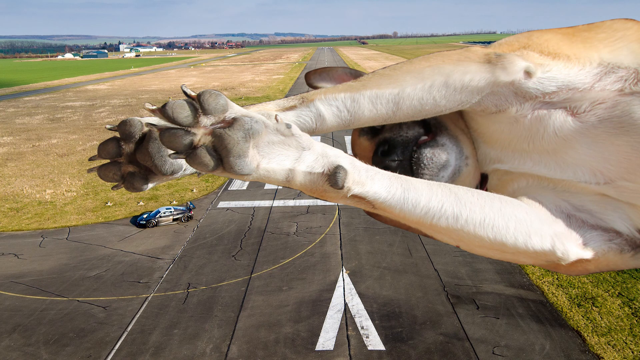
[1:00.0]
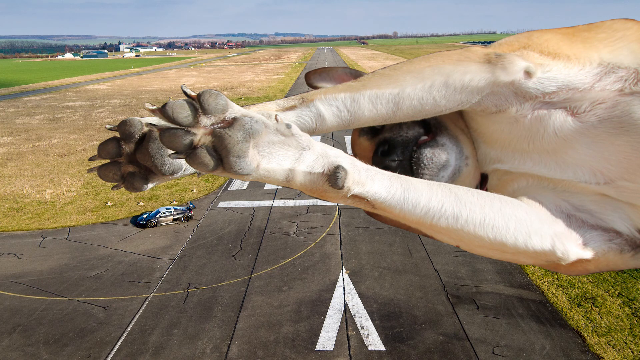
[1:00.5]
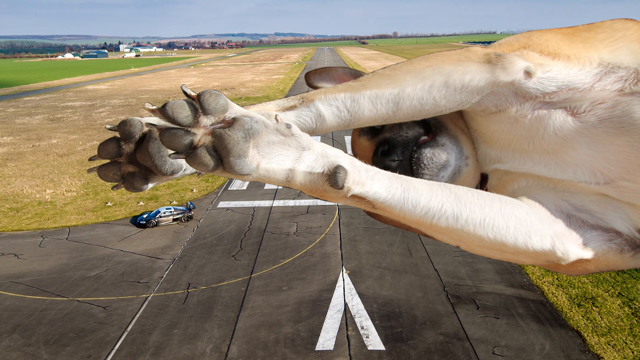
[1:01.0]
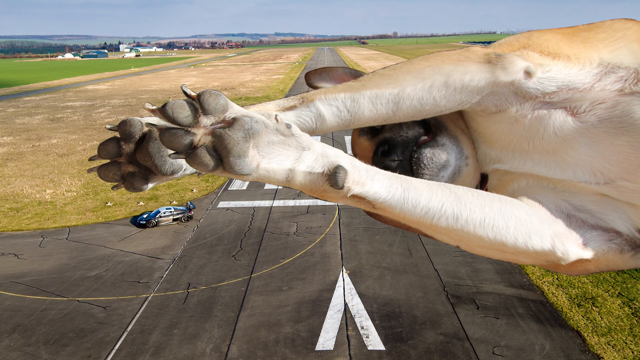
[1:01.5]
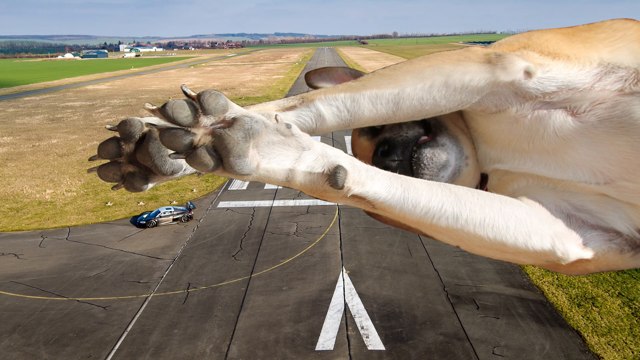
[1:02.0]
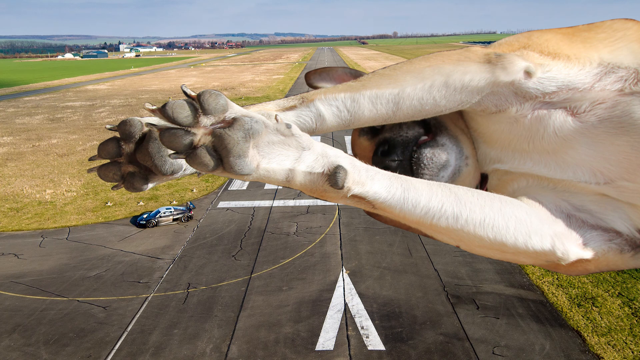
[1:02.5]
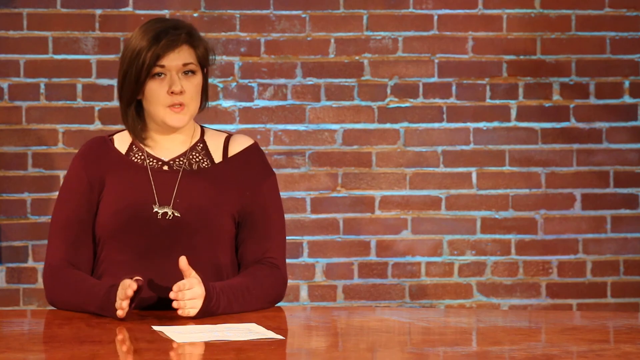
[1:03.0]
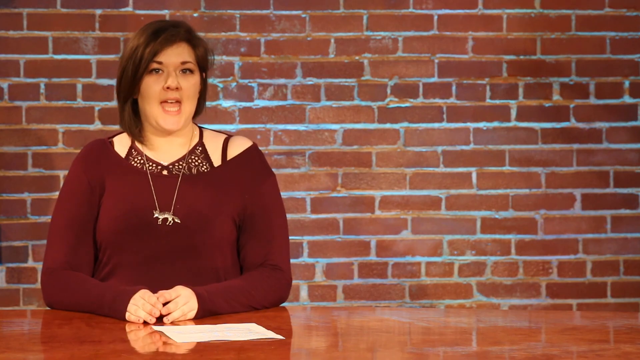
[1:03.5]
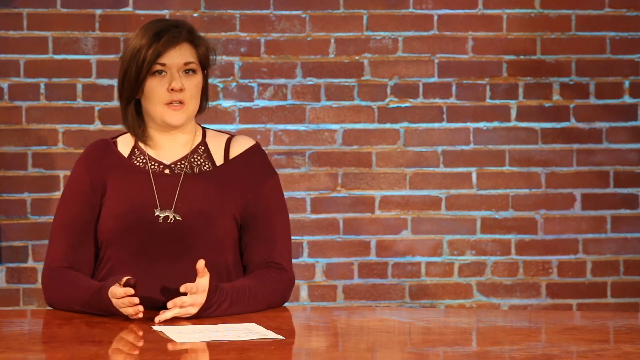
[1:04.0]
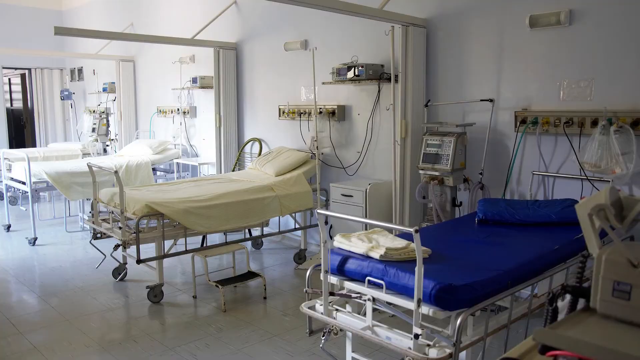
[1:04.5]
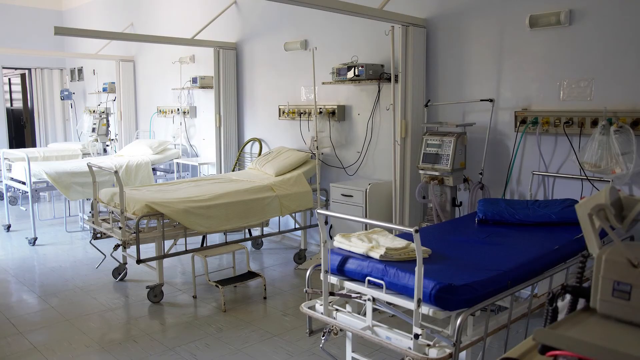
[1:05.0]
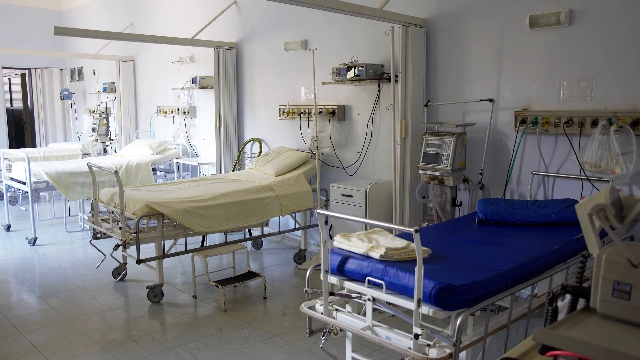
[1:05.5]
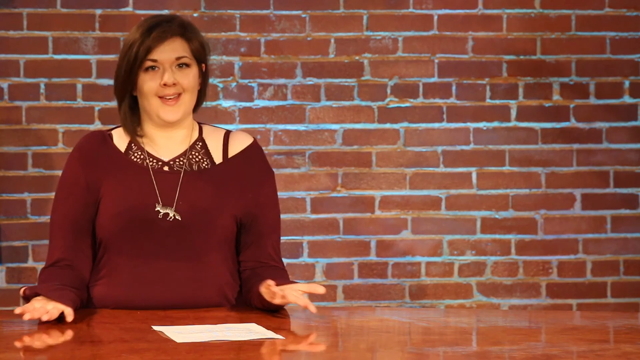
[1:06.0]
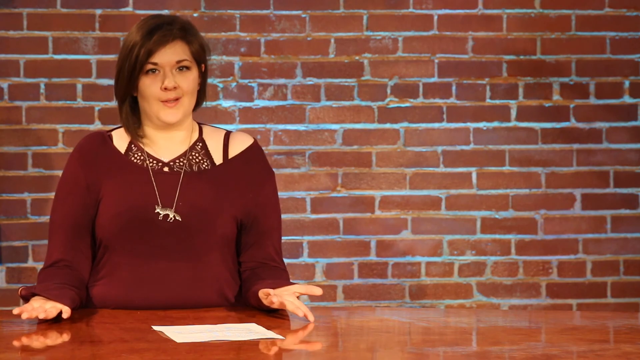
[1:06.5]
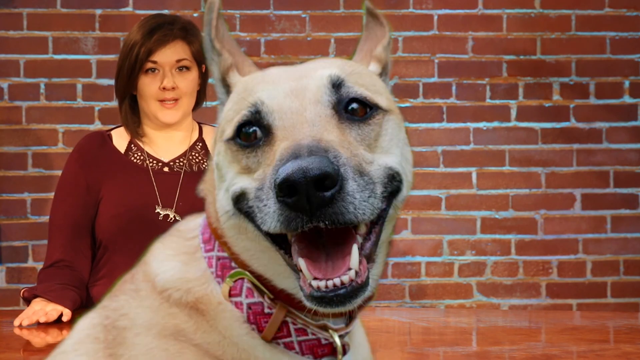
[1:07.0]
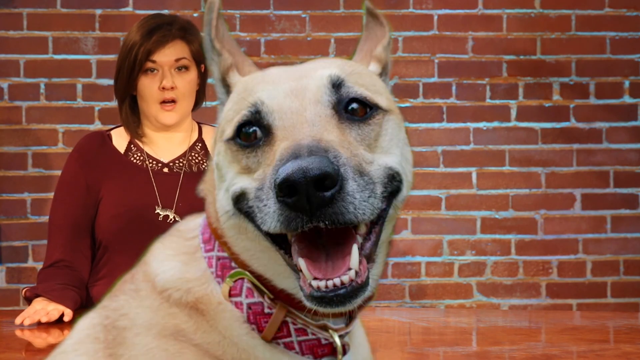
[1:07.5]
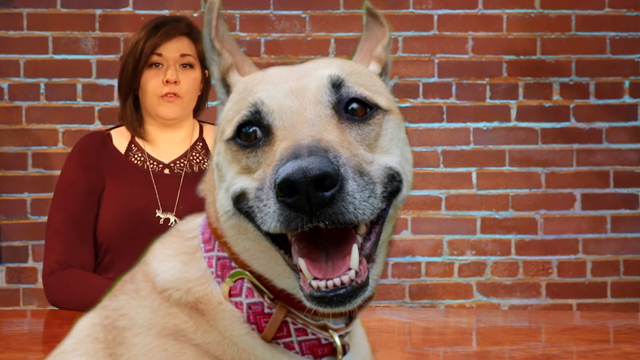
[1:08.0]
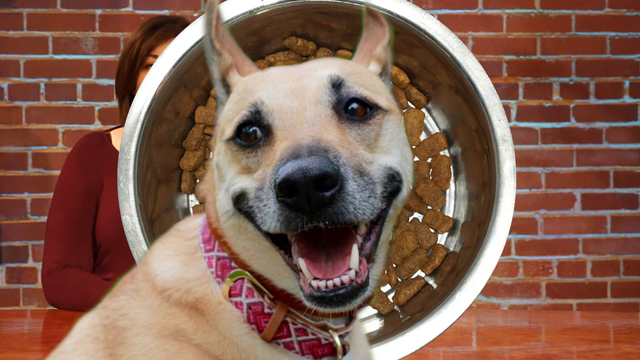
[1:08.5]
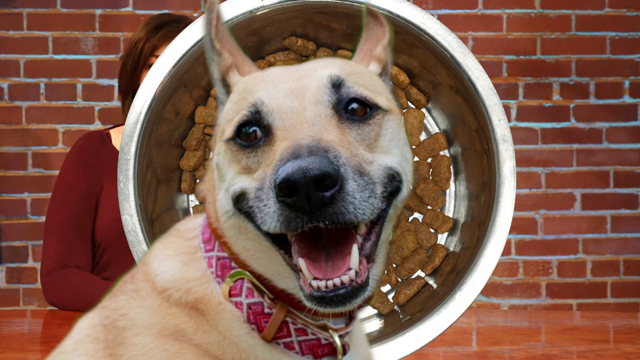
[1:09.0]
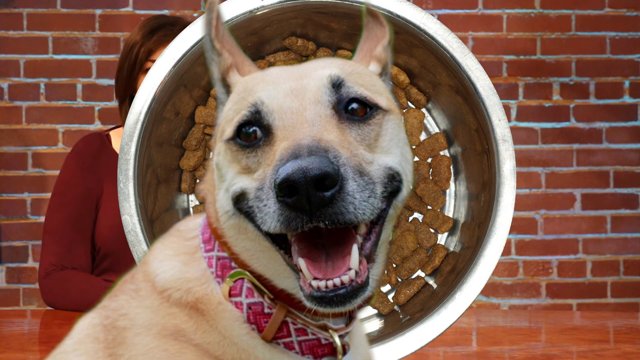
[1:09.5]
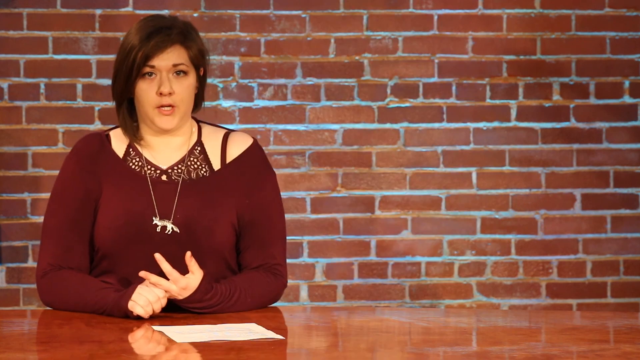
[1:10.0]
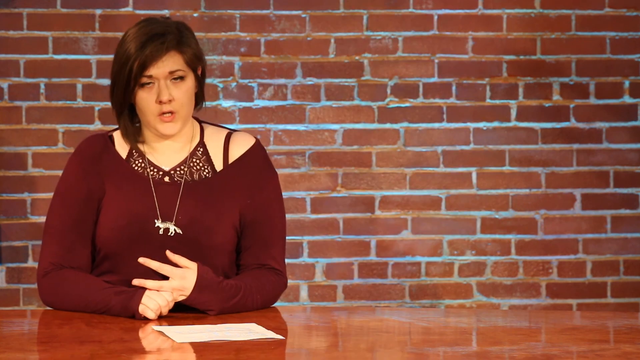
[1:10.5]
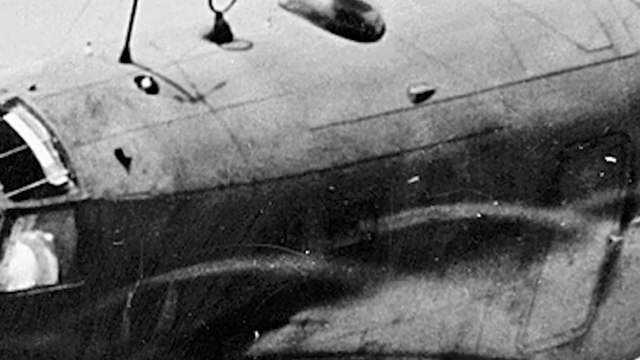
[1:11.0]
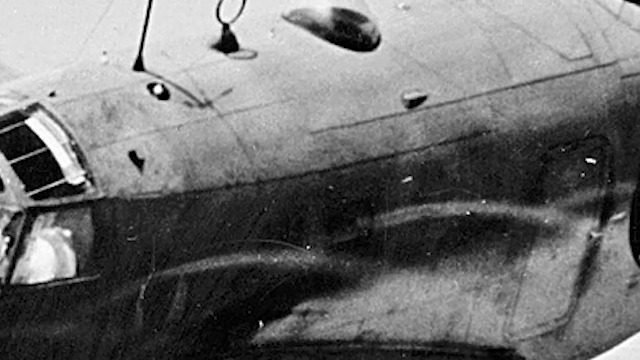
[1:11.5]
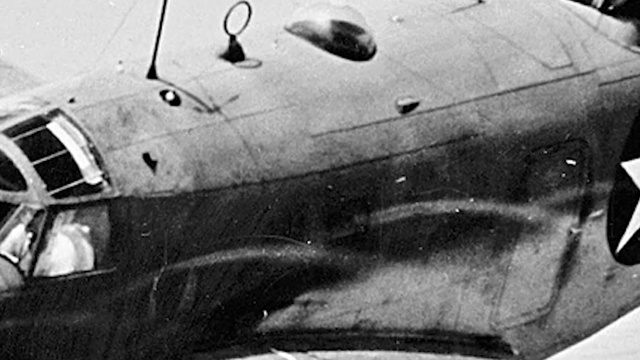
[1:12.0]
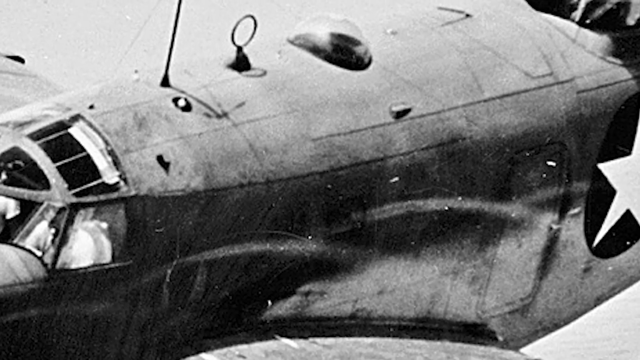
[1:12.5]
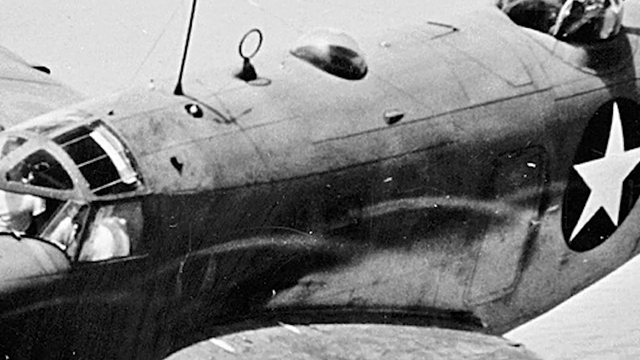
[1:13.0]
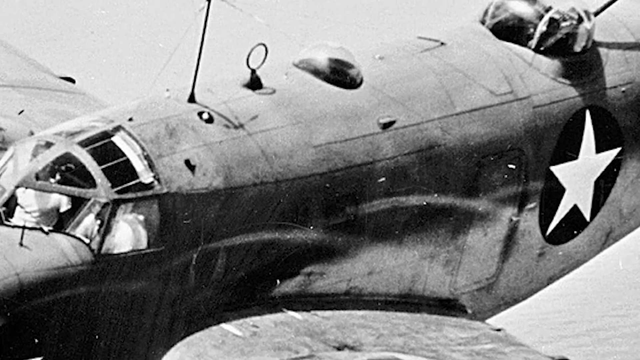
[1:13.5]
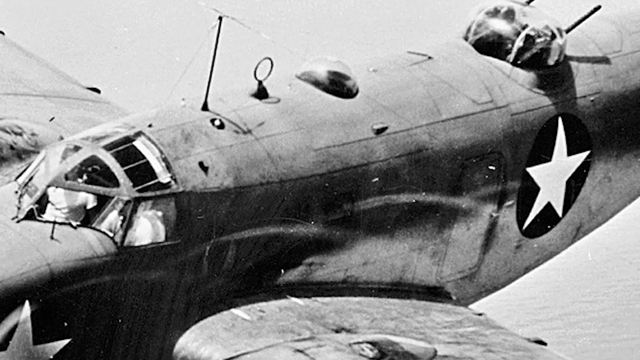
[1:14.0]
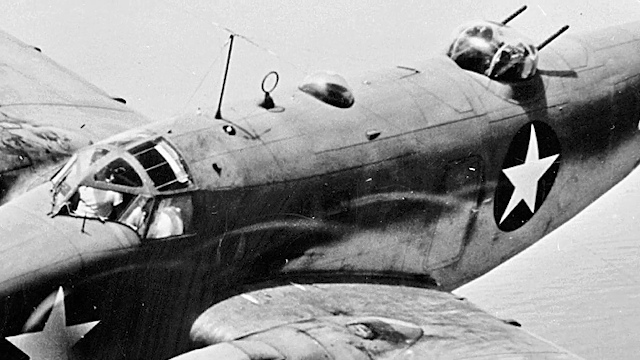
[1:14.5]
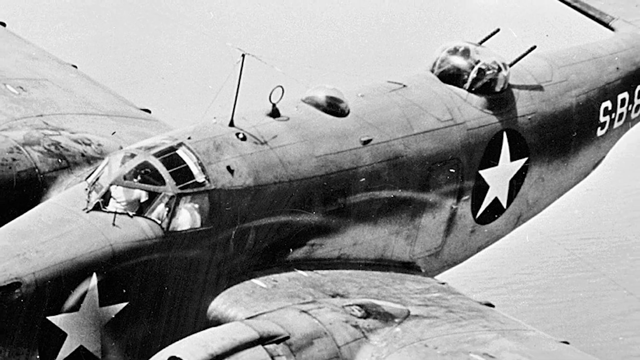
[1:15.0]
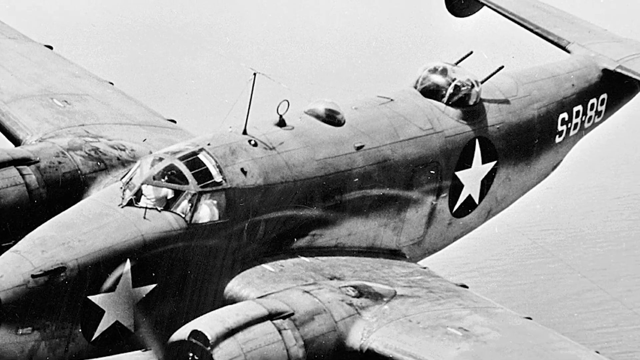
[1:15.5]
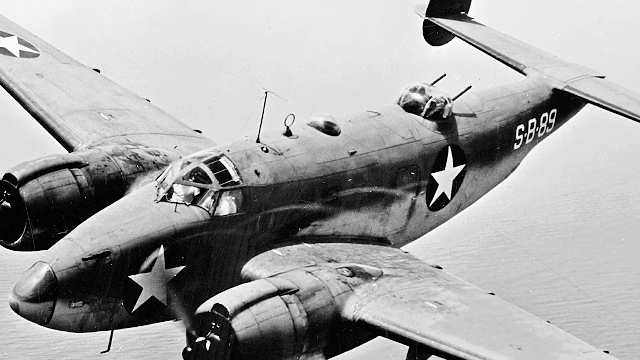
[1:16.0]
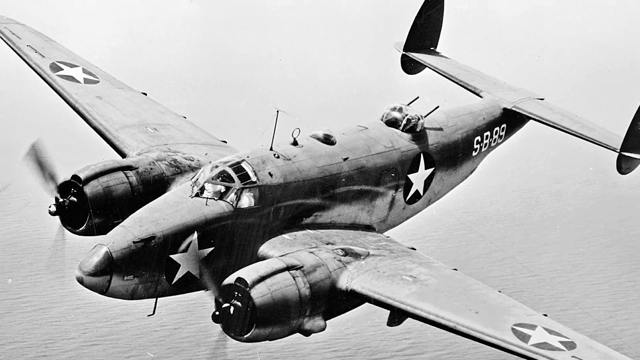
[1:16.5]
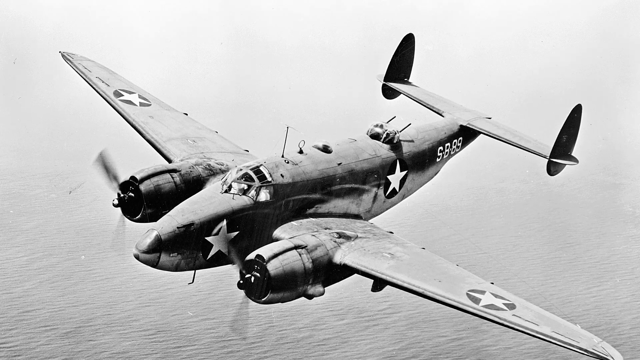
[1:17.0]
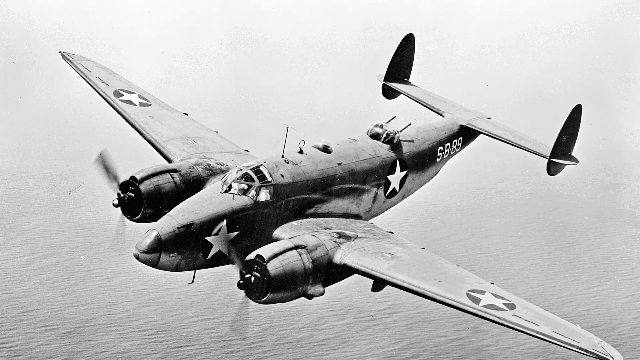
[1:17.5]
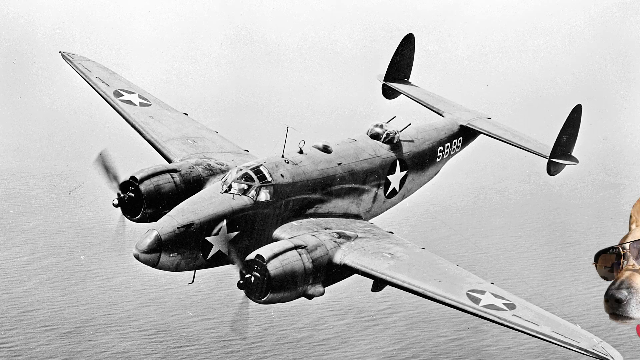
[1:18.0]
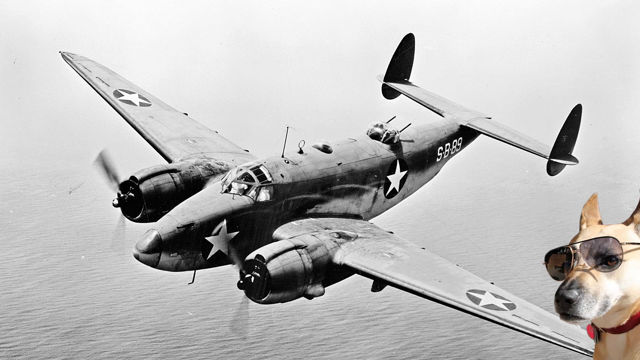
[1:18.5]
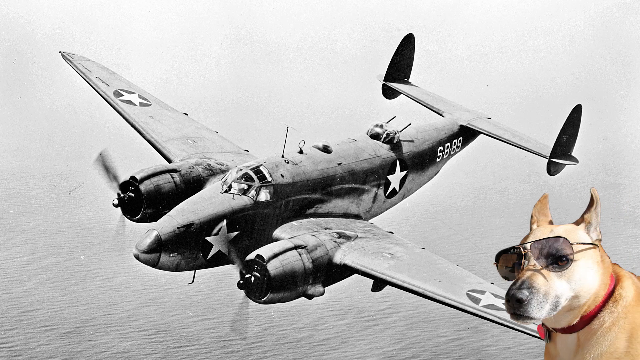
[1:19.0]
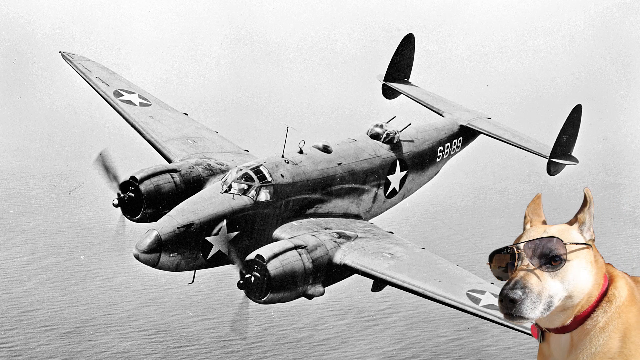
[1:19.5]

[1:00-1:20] A picture of a dog has been blown up really big and laid on a runway, so the dog takes up most of the picture. The dog is laying down with its paws crossed over each other and its head pointing to the left; its paws stand out the most. A police car is down on a runway or roadway. The video then cuts to the content writer, who shows hospitals and then the dog, which is smiling and wearing a pink bandana, with a bowl of dog food directly and symmetrically behind its head. Next comes a black-and-white clip of what looks like an SB-89 airplane used during the war, a really old-looking airplane with a bright star on its left side and stars in circles on its wings. Suddenly a dog's head goes through the side, and a dog wearing sunglasses appears in the lower right-hand corner.